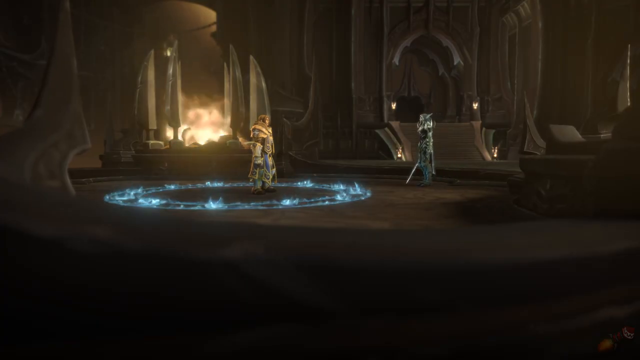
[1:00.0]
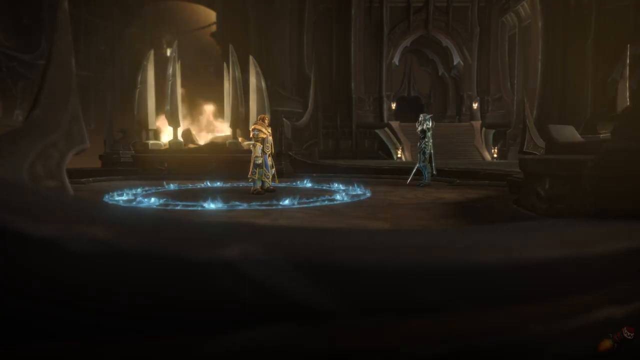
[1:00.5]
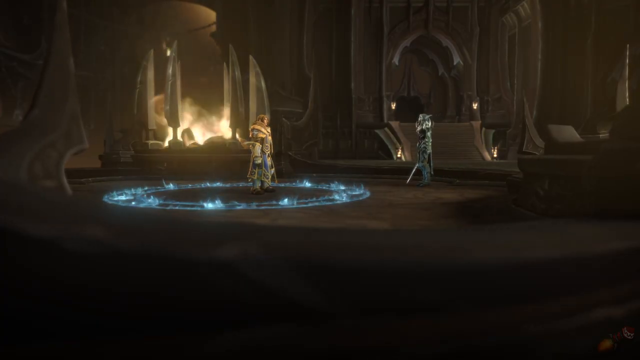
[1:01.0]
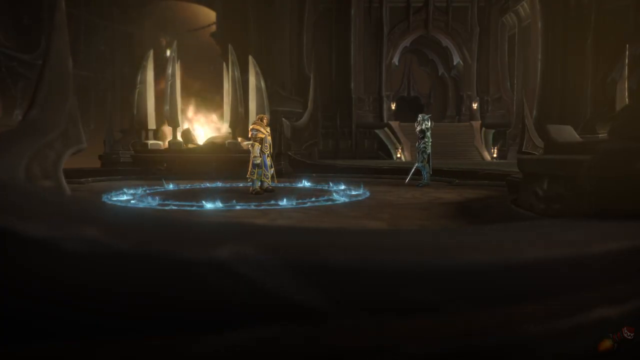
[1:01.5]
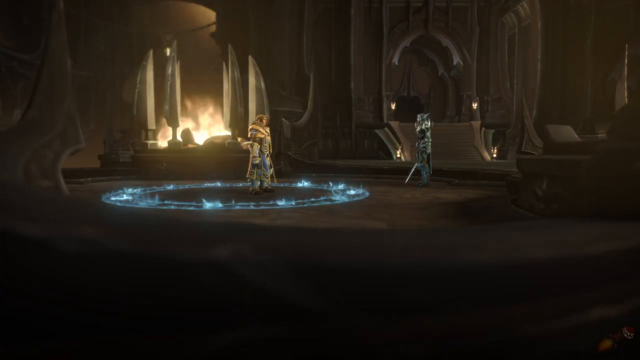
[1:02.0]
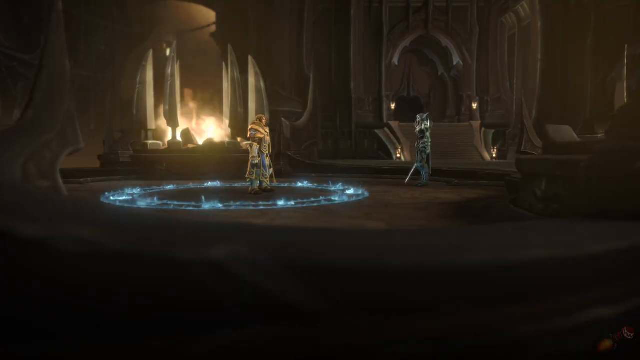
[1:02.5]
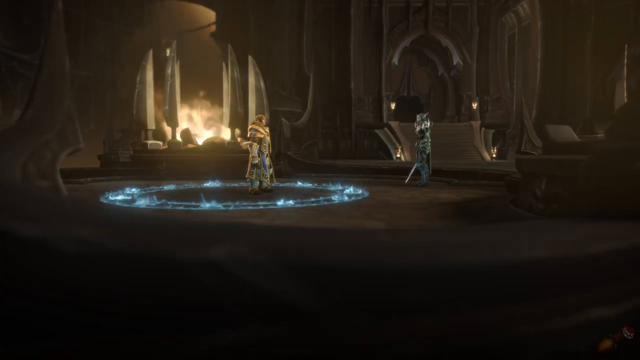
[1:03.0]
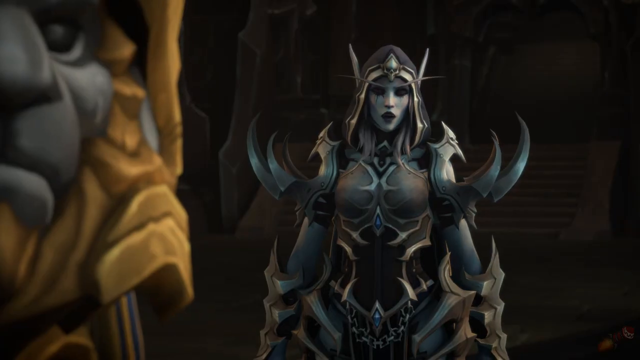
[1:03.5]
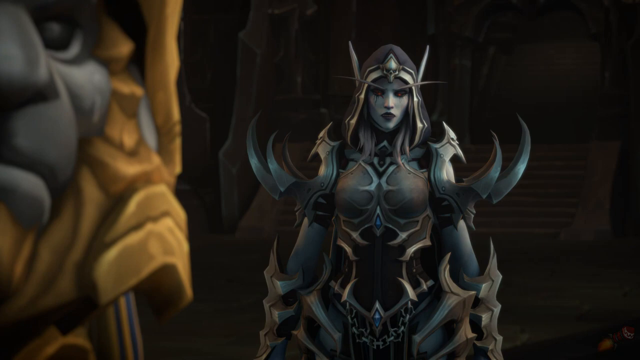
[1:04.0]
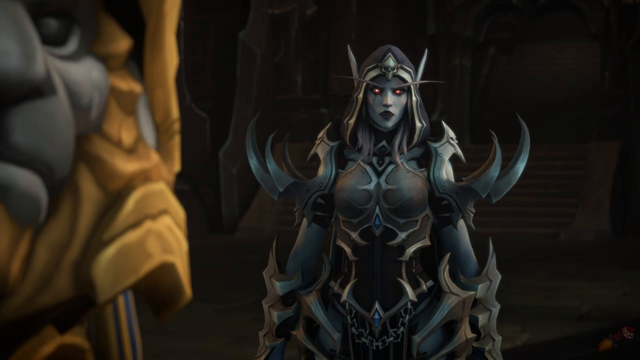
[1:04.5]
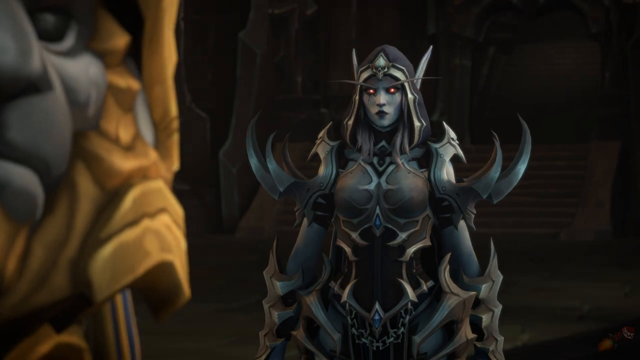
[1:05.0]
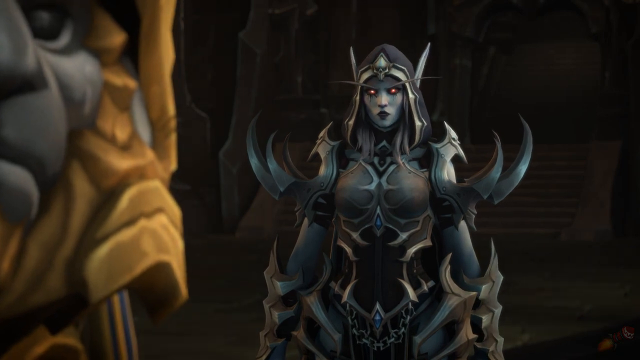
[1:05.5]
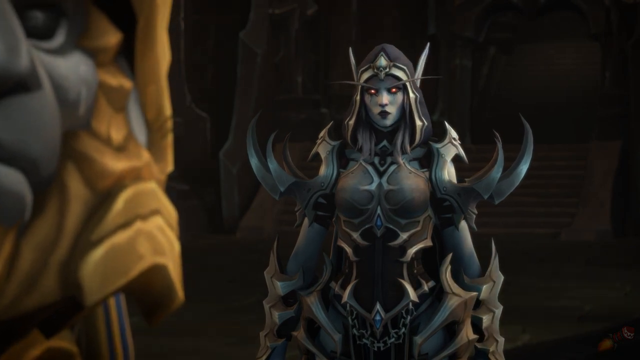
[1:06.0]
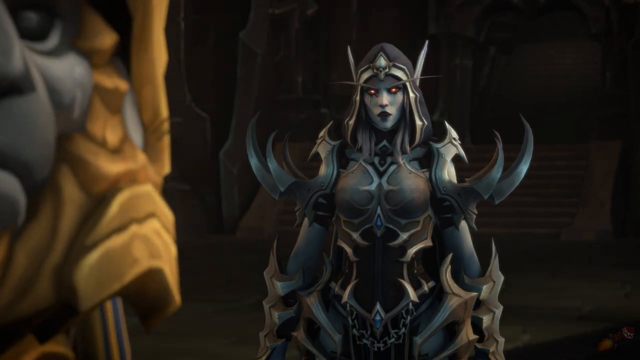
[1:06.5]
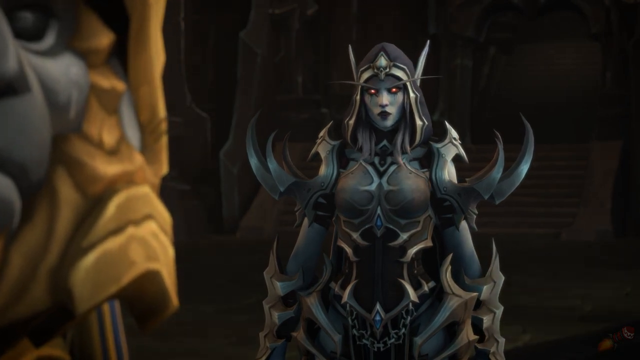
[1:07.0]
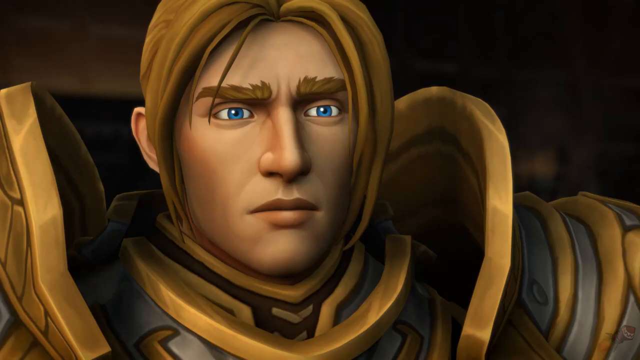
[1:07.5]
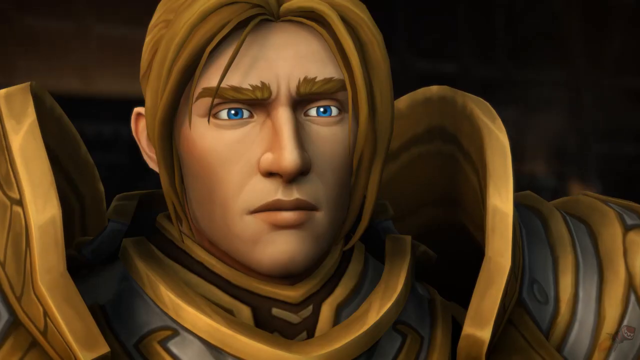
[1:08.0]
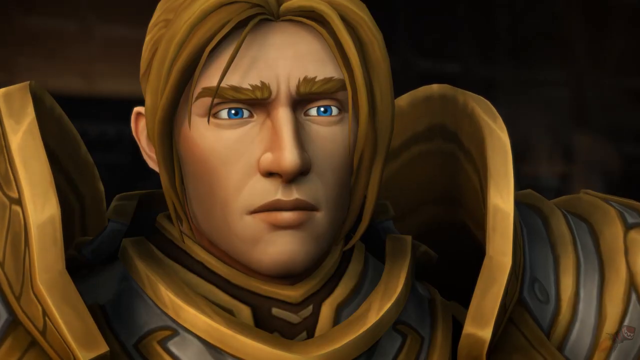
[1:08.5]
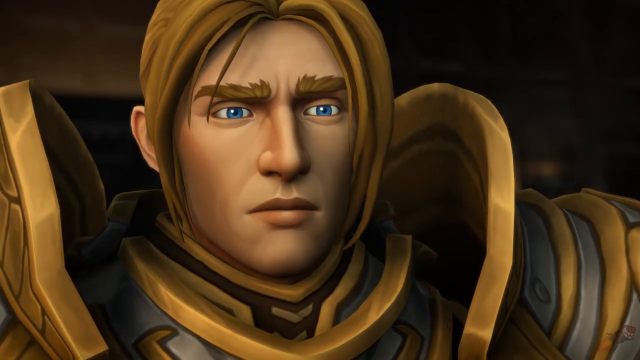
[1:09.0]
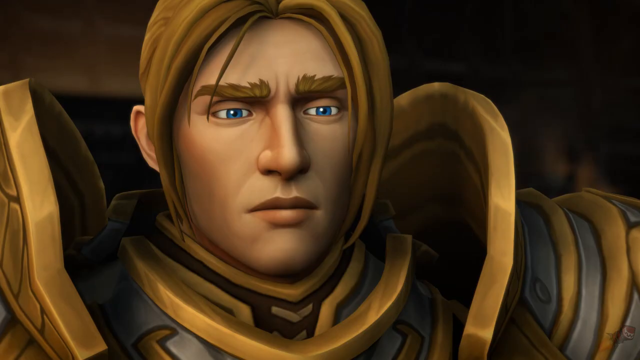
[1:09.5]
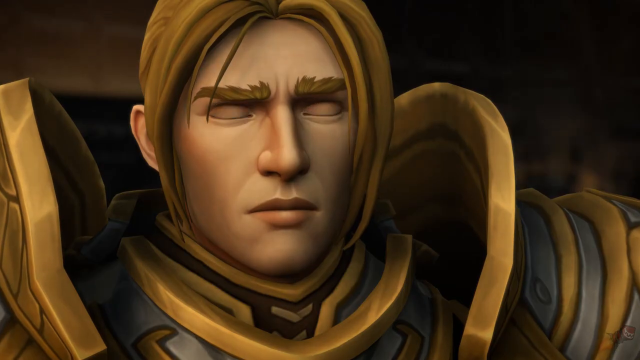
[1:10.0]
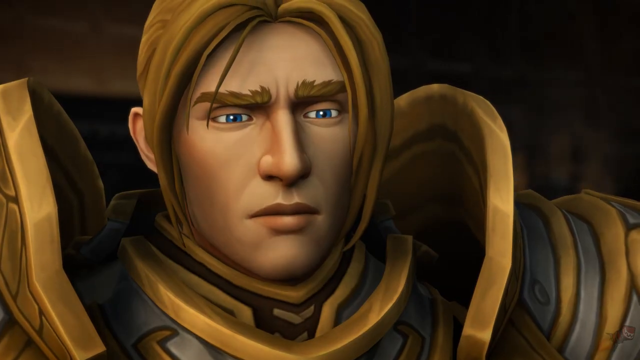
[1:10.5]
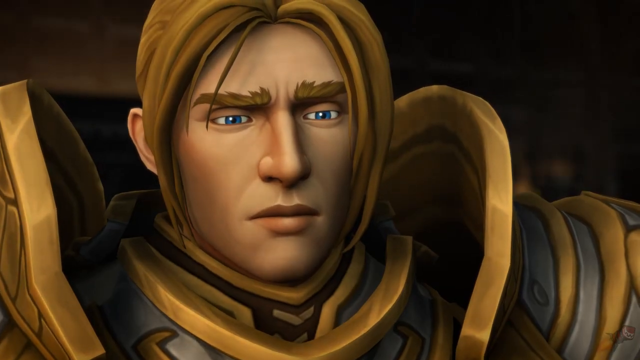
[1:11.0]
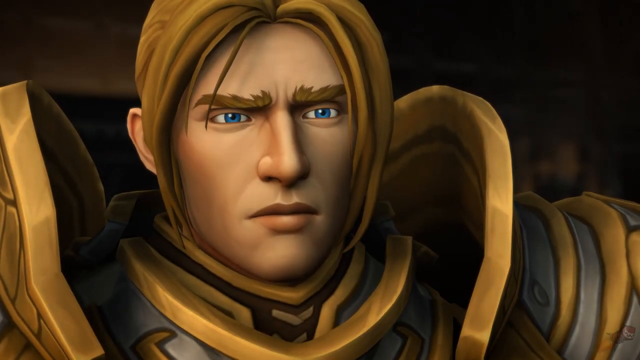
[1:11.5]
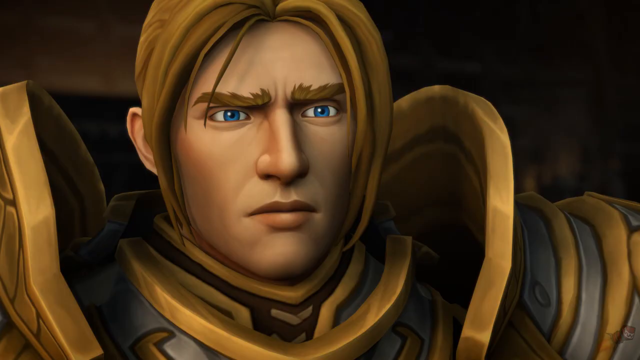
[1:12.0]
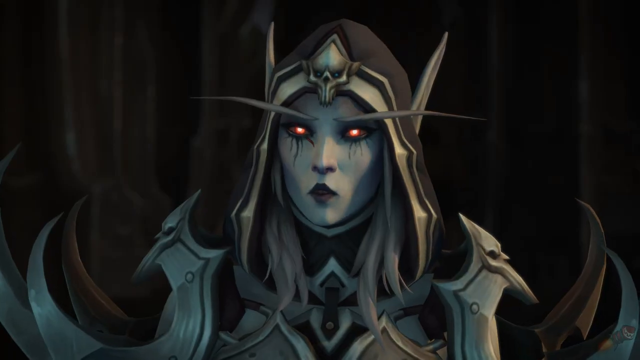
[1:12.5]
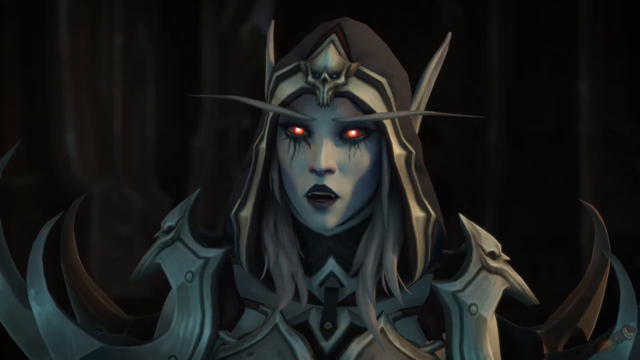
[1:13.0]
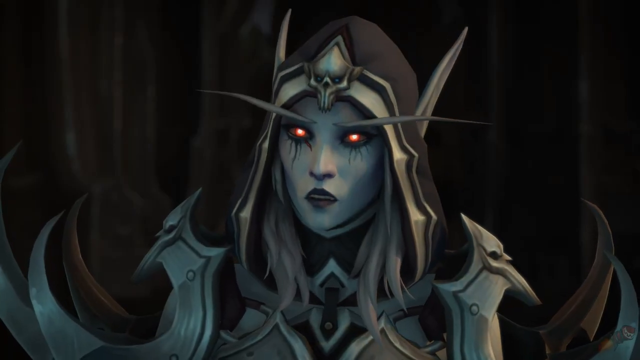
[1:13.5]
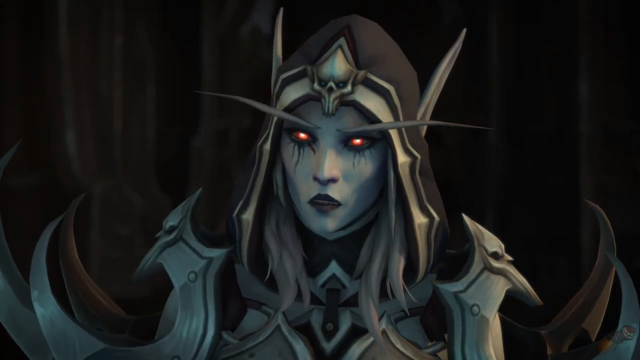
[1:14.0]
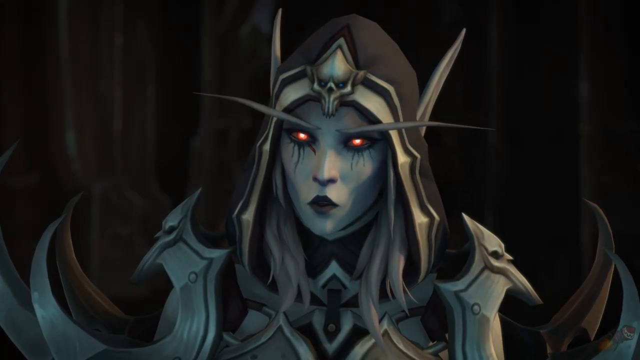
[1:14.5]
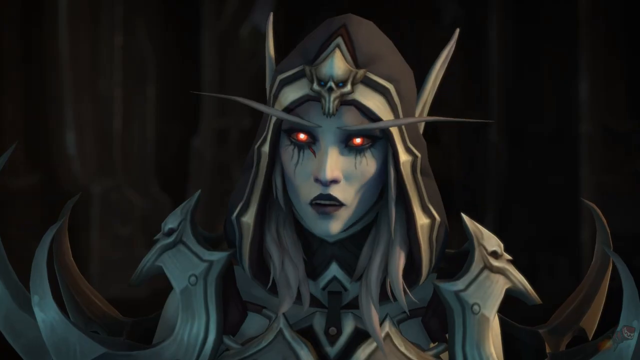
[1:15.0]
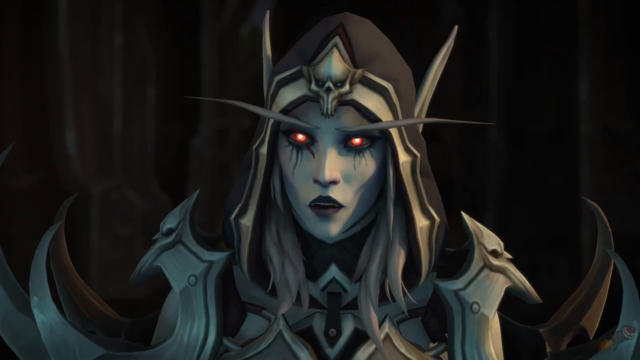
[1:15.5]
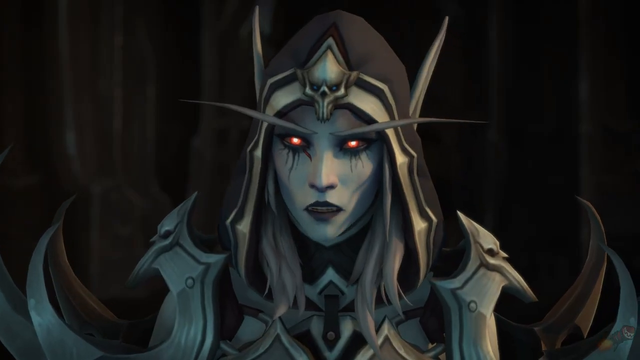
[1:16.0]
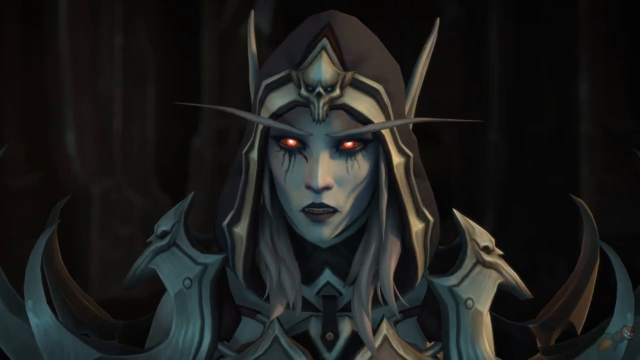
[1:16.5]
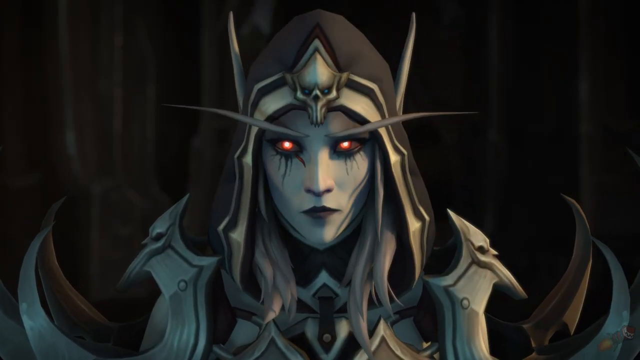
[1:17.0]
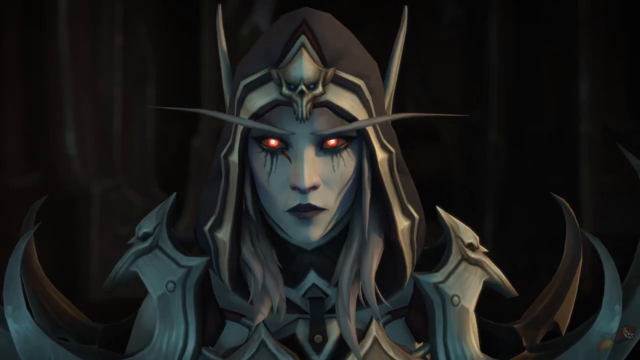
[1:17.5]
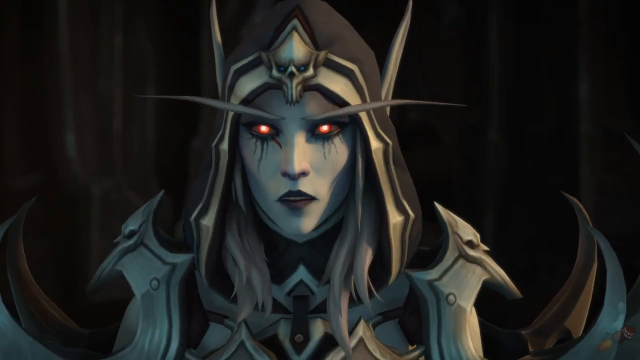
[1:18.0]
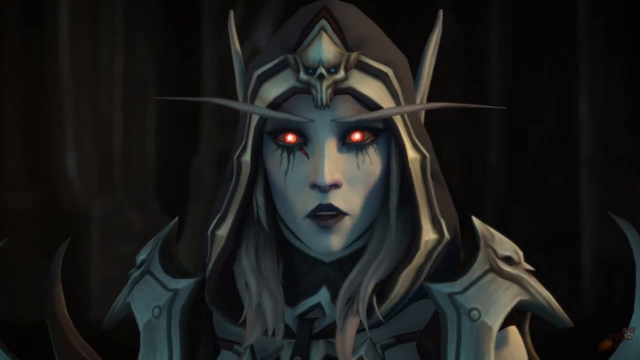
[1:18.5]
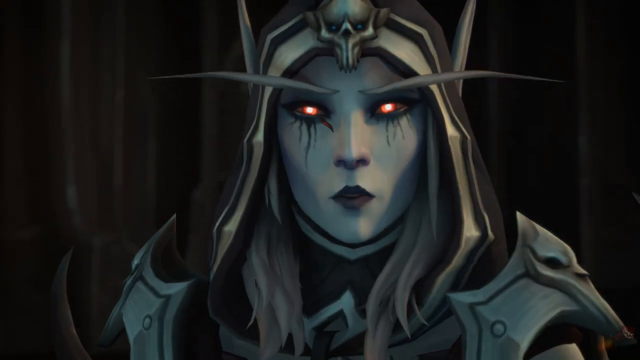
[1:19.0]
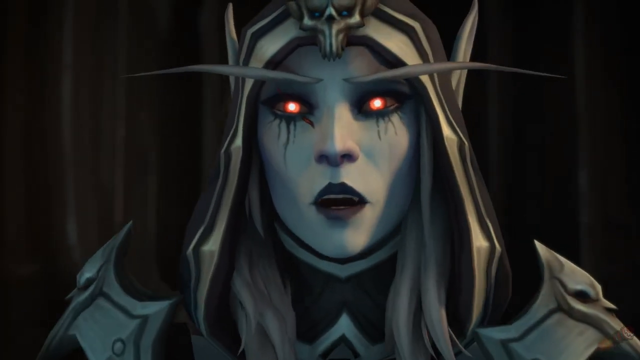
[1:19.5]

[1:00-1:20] Video game characters are engaged in fighting. One character with blonde hair fights against another in a one-on-one match. The background is a dark brown shade, with a light flame on the left-hand side and a blue ring on the ground at the bottom, giving a mysterious-looking environment.